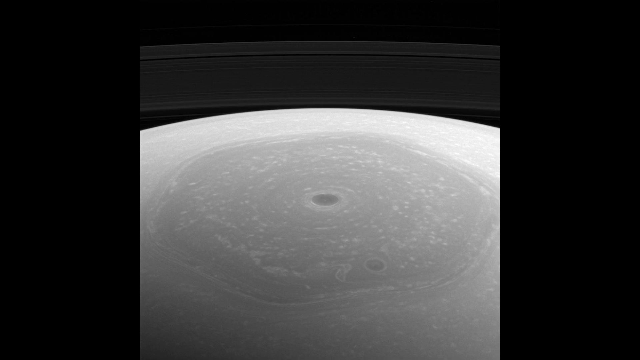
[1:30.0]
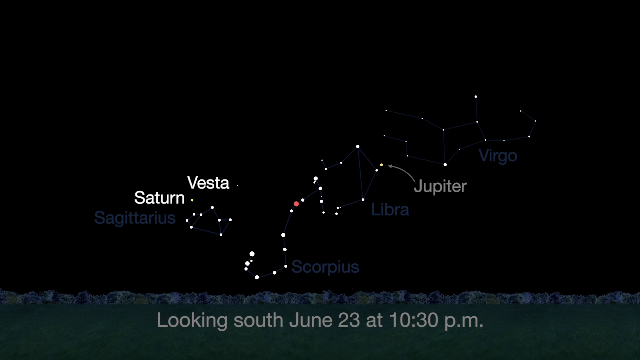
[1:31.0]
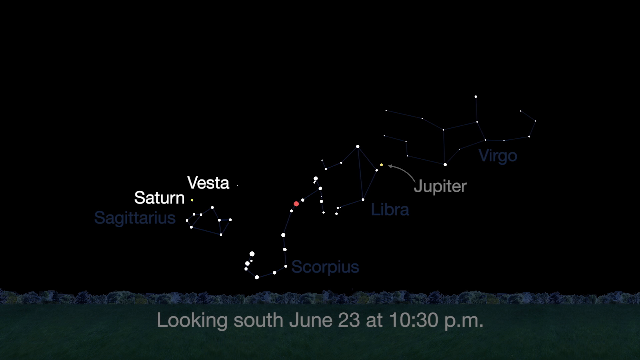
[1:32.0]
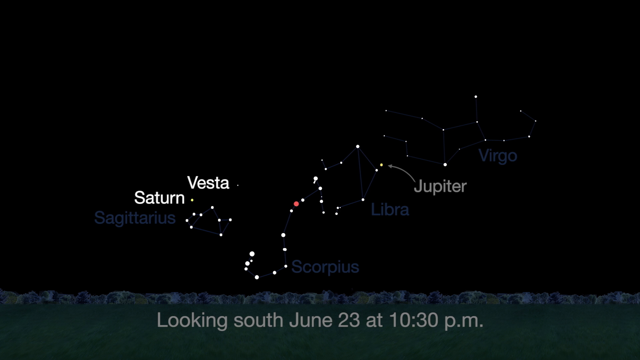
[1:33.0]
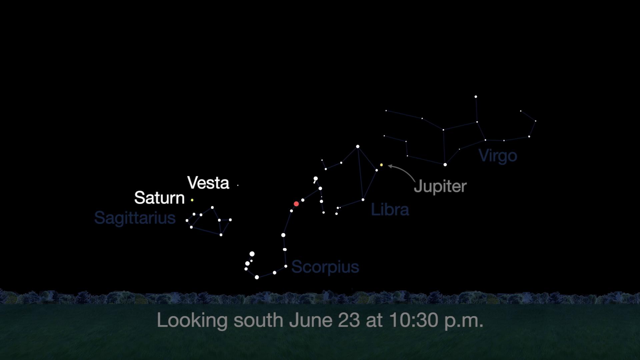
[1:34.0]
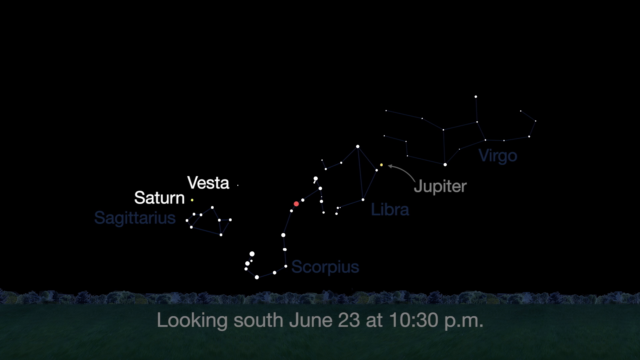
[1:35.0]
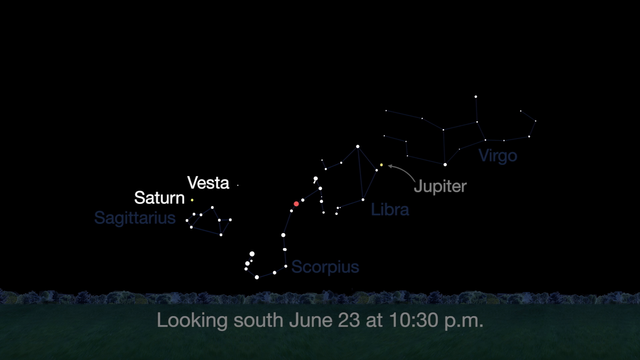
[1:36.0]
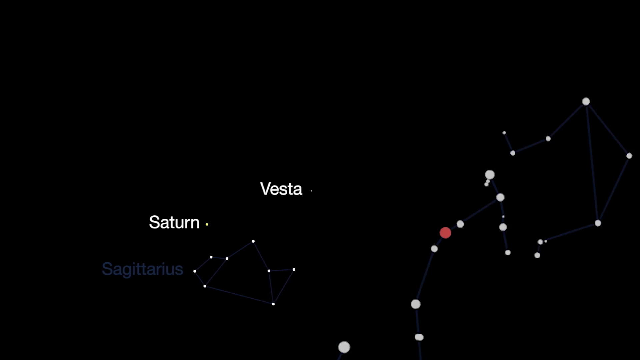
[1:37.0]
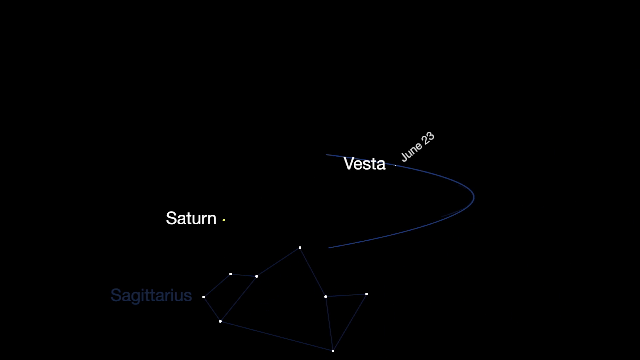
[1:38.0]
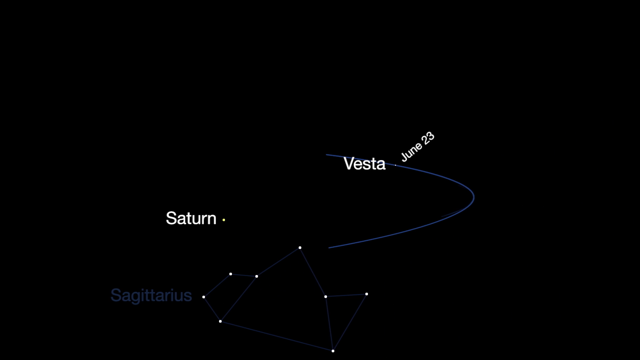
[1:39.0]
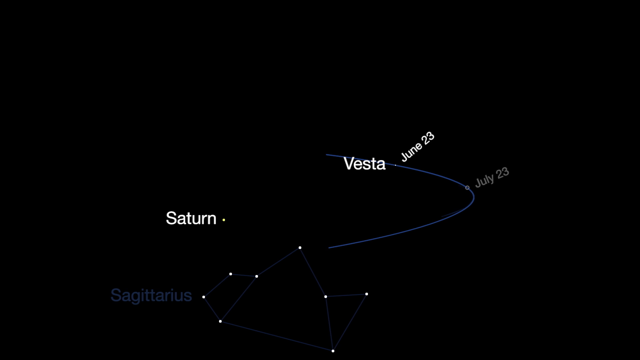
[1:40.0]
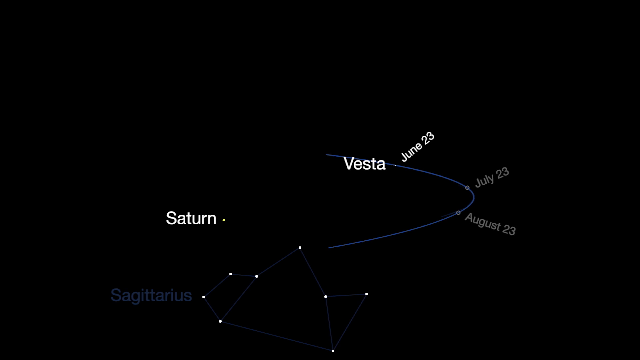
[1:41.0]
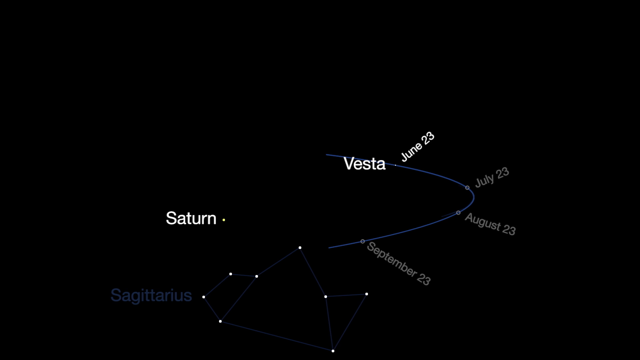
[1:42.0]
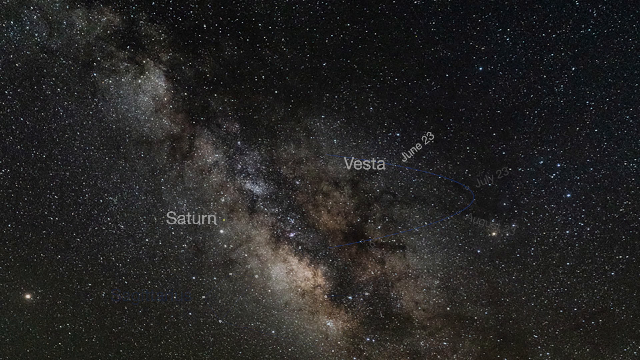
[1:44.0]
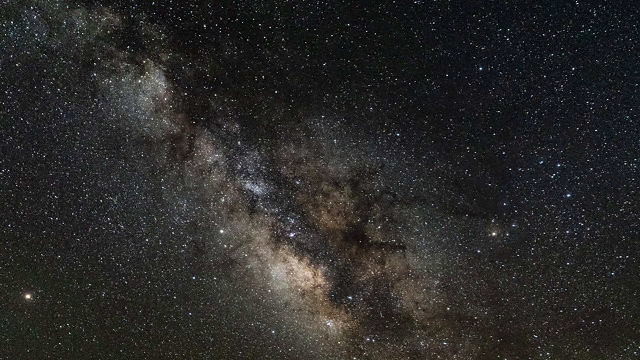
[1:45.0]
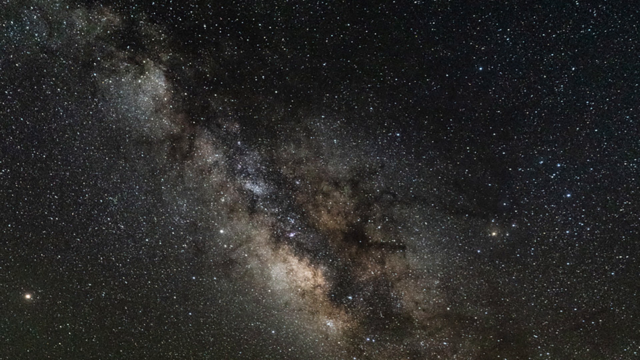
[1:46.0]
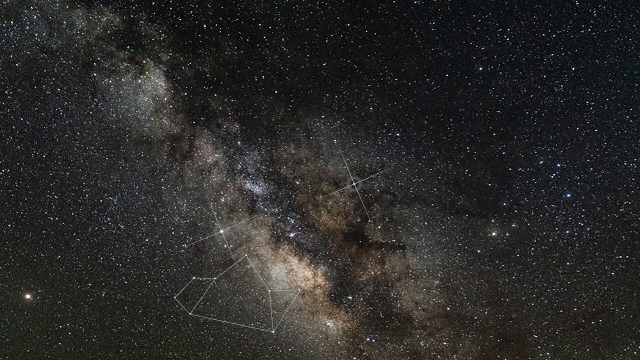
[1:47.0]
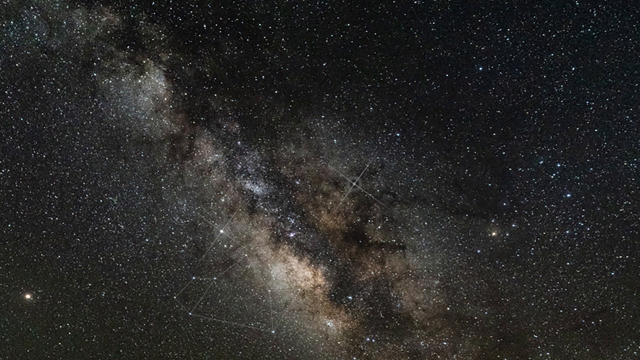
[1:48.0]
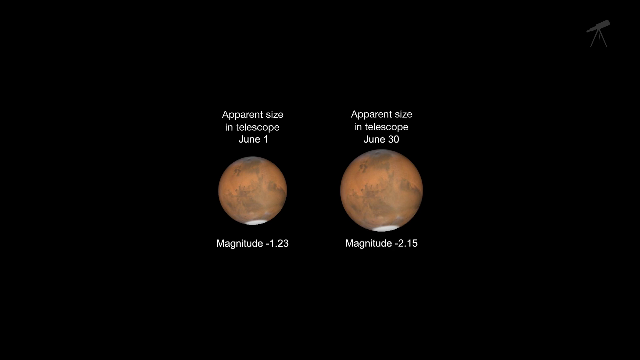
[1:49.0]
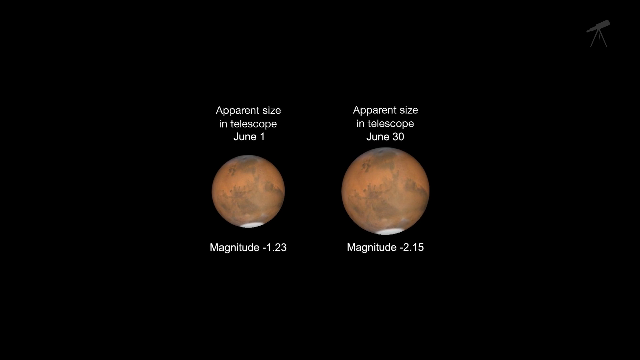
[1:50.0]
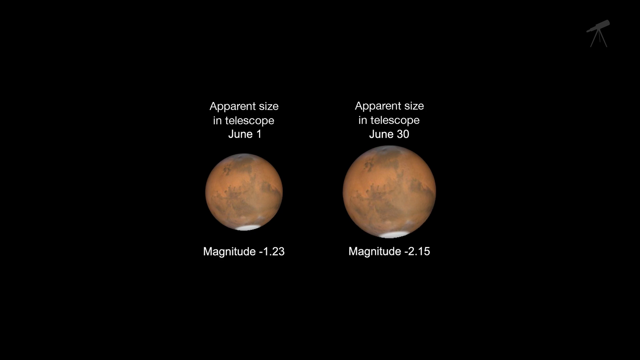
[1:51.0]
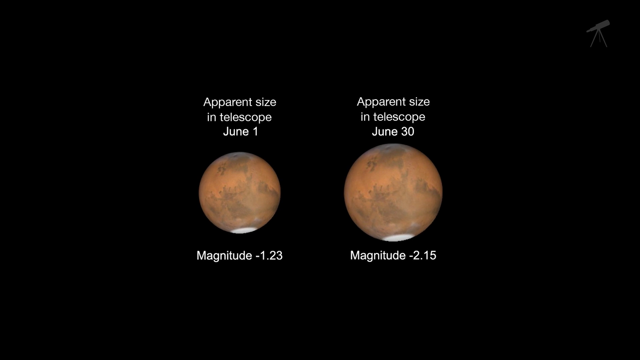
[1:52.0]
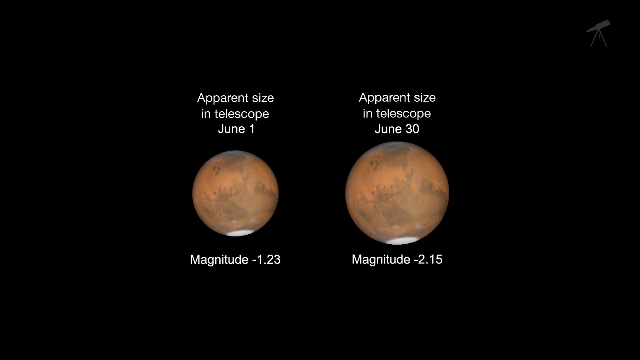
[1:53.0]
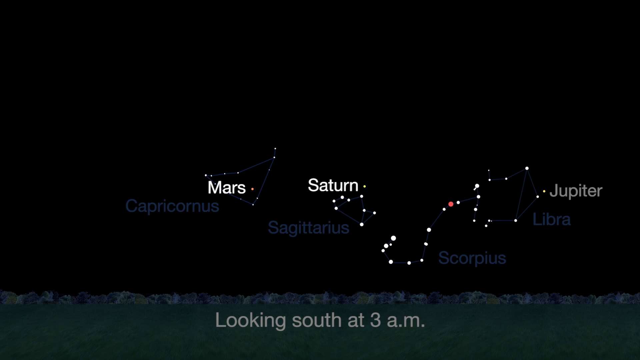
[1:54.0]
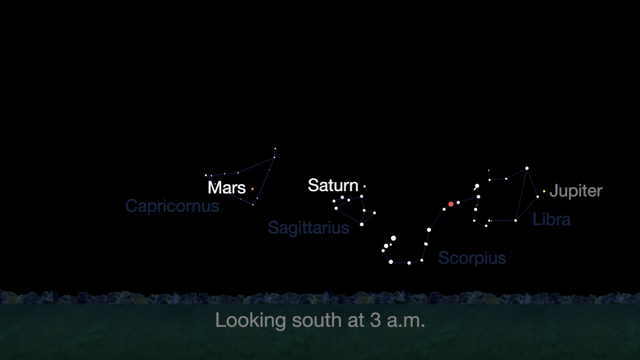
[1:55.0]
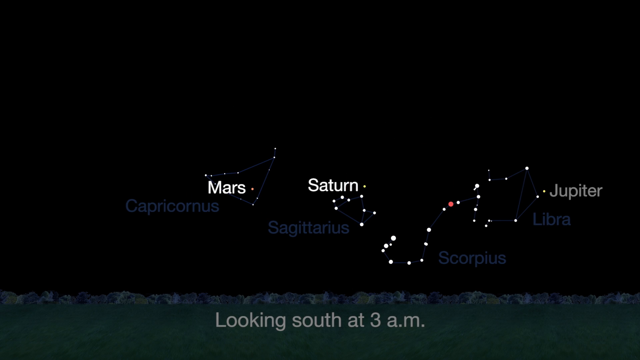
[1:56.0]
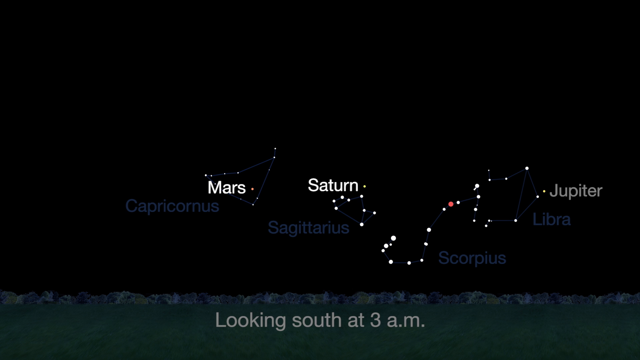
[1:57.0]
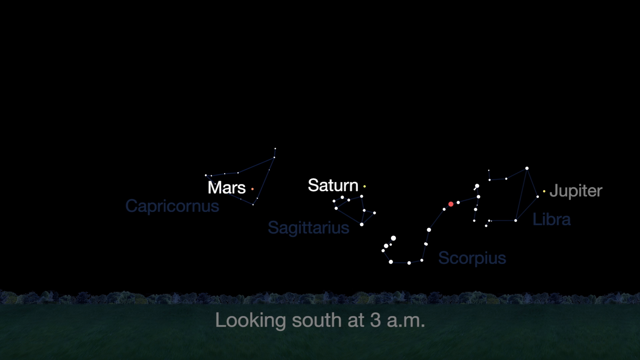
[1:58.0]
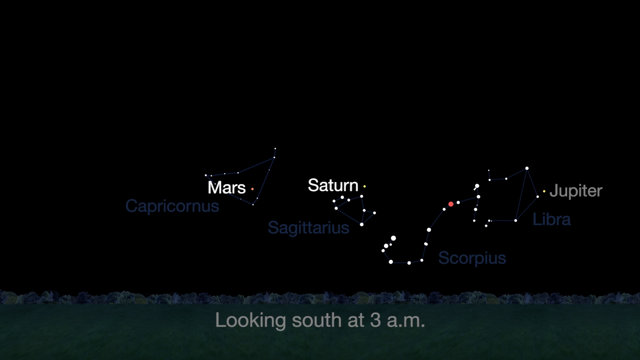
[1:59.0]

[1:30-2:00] Another star placement map shows the constellations Sagittarius, Scorpius, Libra and Virgo. Jupiter is between Libra and Virgo, Saturn is above Sagittarius, and a name, Vesta, is labeled on the sky map. Scorpius is close to the horizon, with Libra above it on the top left and Sagittarius above it on the top right. The map is looking south on June 23 at 10:30 p.m. Vesta has a semi-orbit drawn as a blue curve, with dates at points along it: June 23rd, July 23rd, August 23rd and September 23rd. A close-up of the Milky Way follows, with sparkling stars and some constellations that fade very quickly, appearing for only a few seconds before the image goes away. Next, two images show Mars at different angles: the first shows its apparent size in a telescope on June 1st, and the second its apparent size in a telescope on June 30th. After the Mars comparison, another star map shows the positions of Mars, Saturn and Jupiter along with the constellations: Capricorn below Mars, Sagittarius below Saturn, and Scorpio and Libra below Jupiter. This map is looking south at 3 a.m.